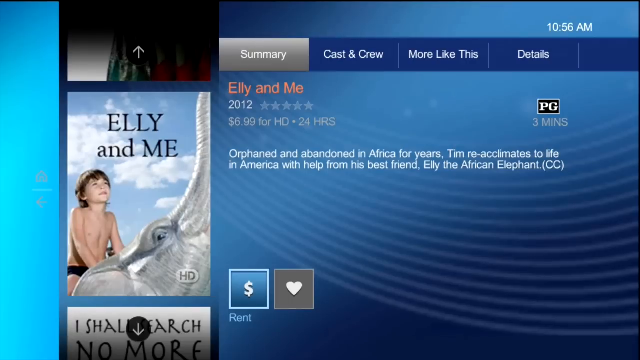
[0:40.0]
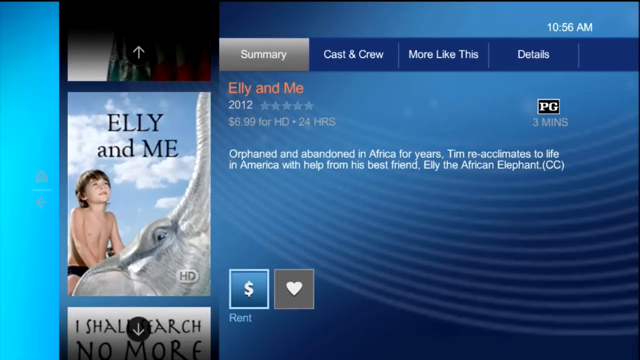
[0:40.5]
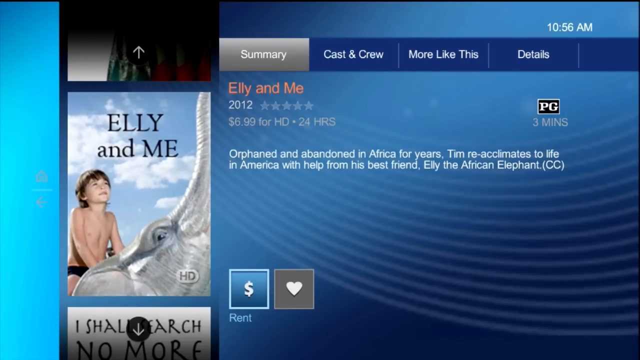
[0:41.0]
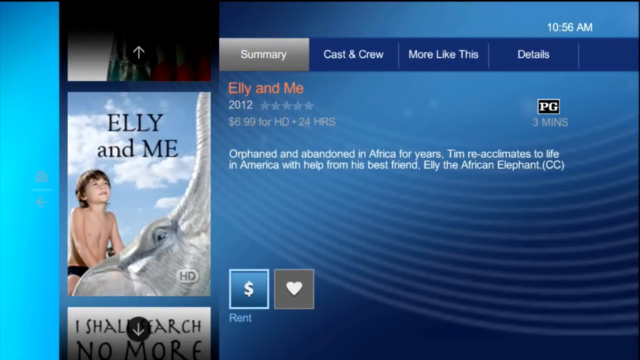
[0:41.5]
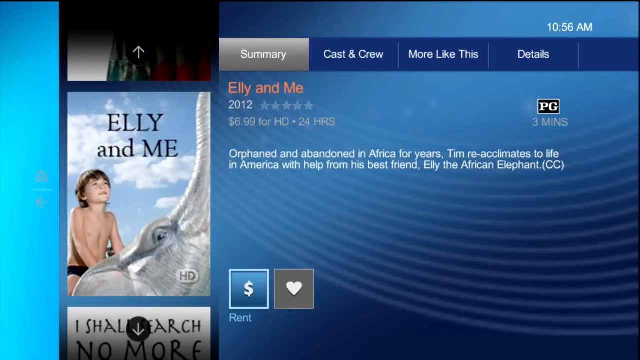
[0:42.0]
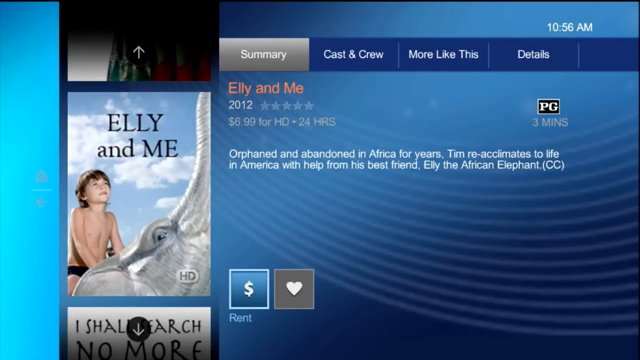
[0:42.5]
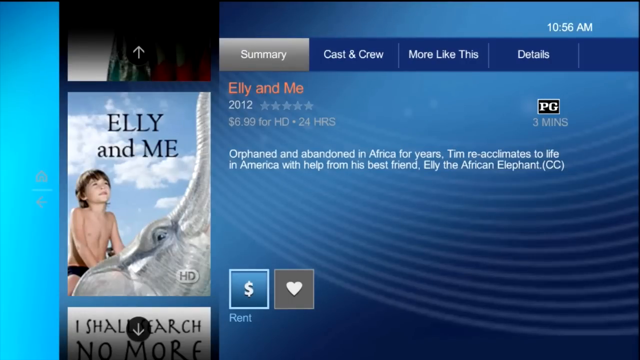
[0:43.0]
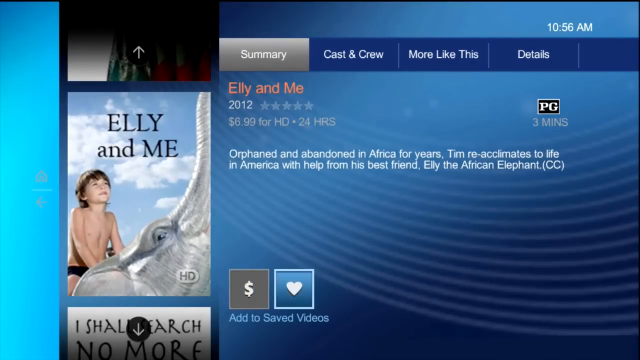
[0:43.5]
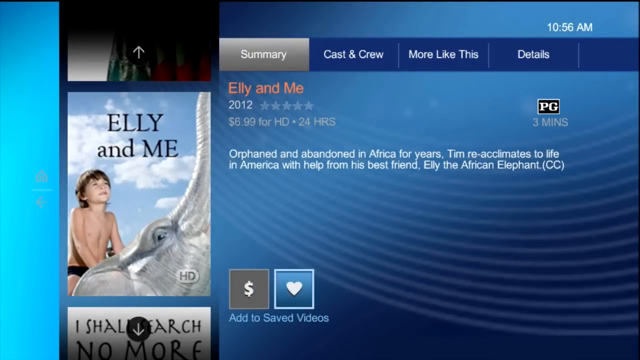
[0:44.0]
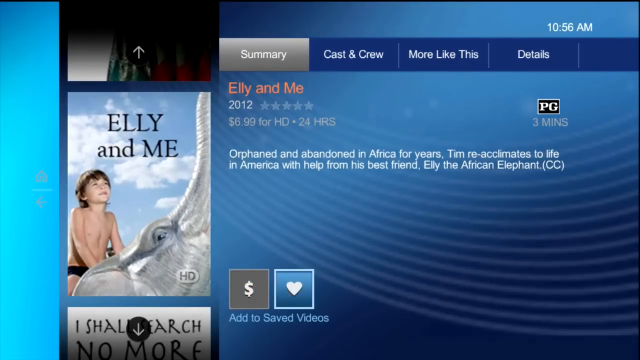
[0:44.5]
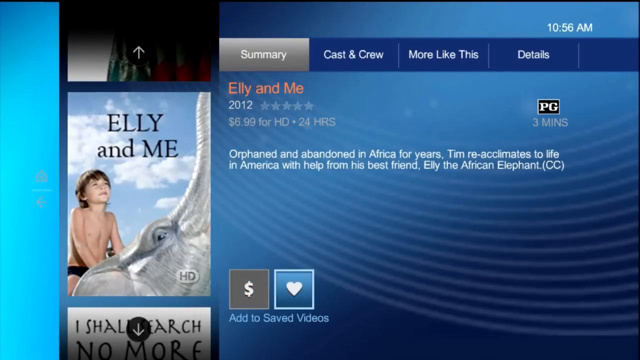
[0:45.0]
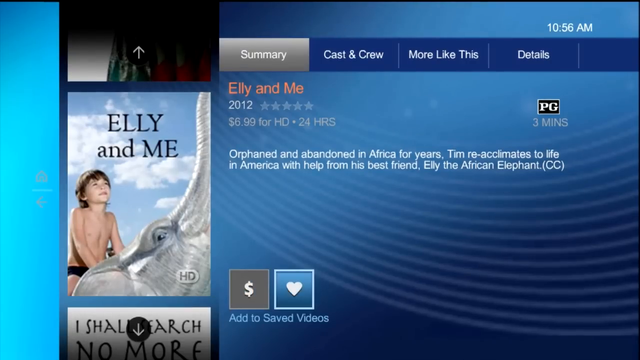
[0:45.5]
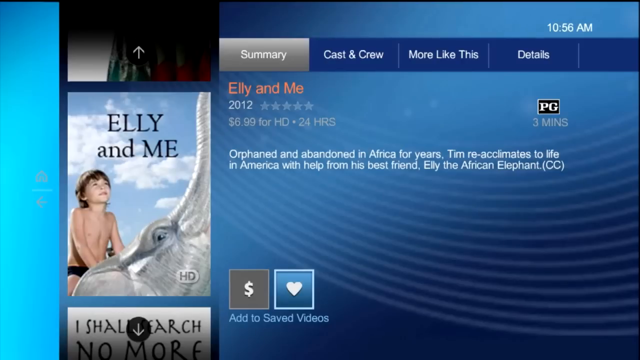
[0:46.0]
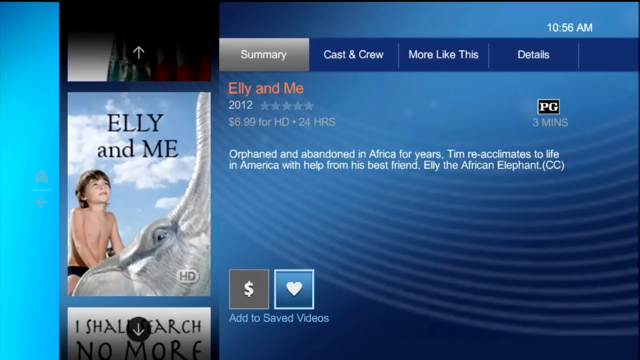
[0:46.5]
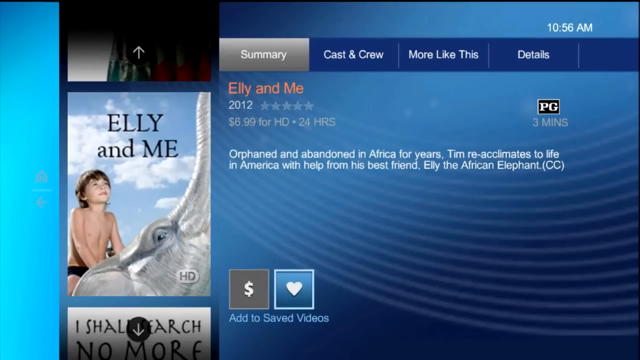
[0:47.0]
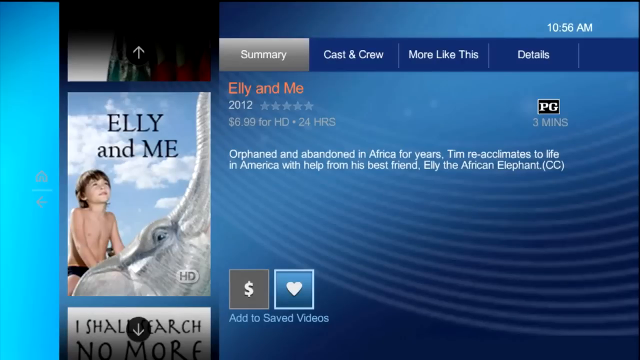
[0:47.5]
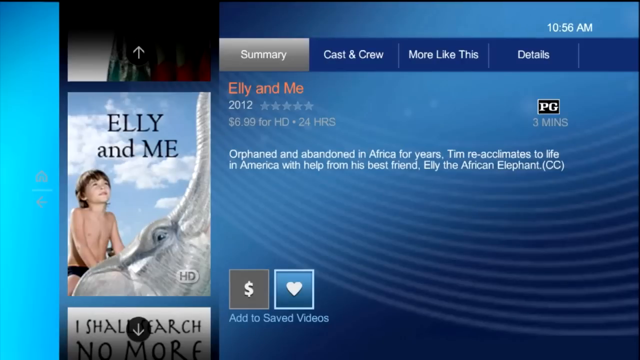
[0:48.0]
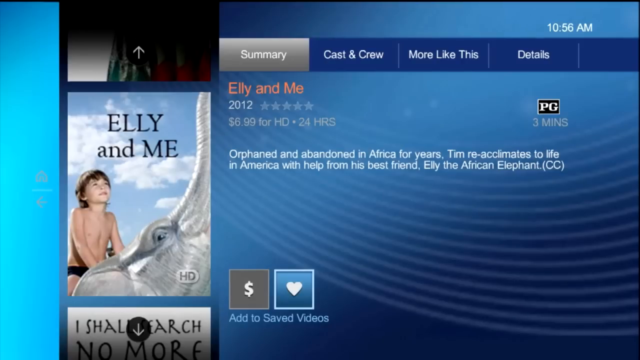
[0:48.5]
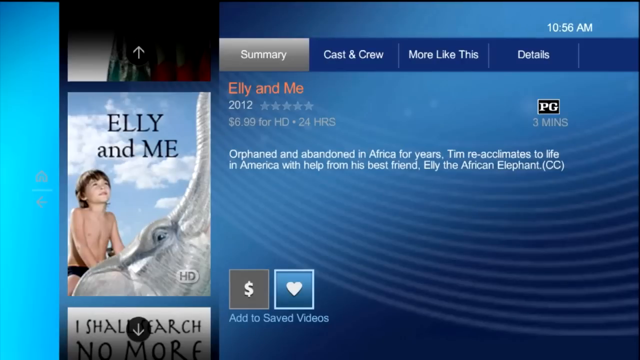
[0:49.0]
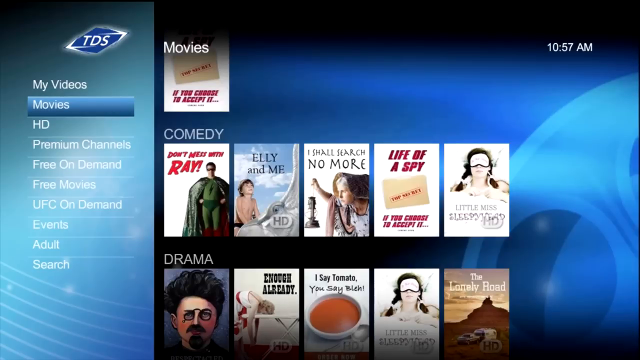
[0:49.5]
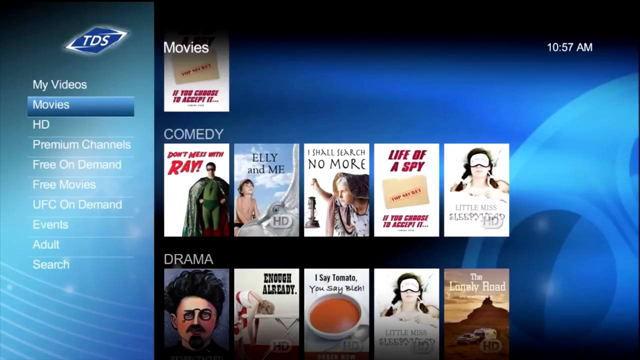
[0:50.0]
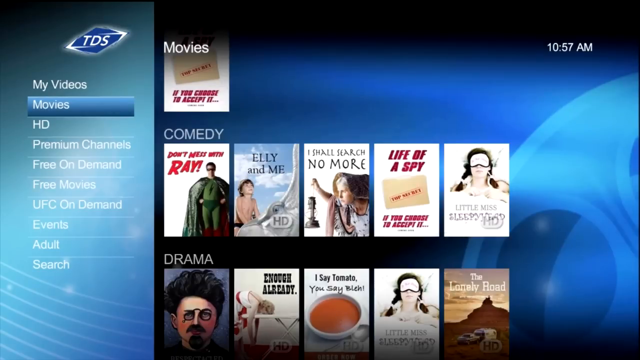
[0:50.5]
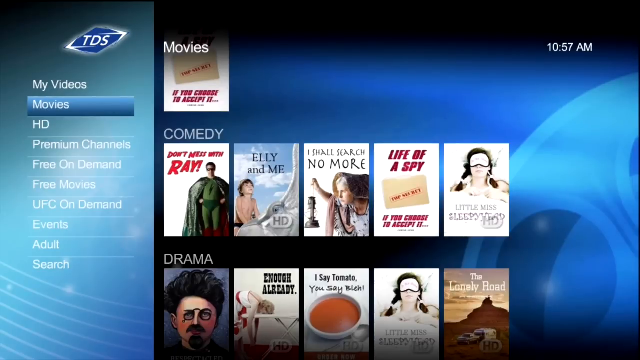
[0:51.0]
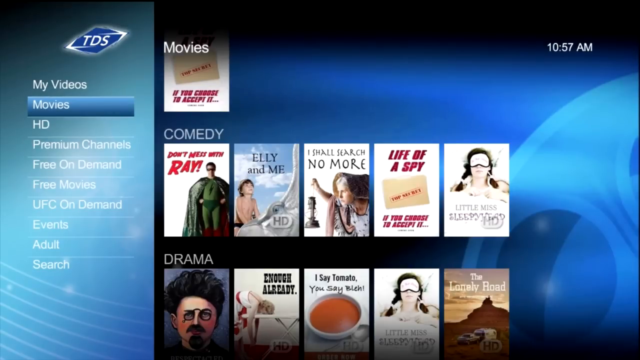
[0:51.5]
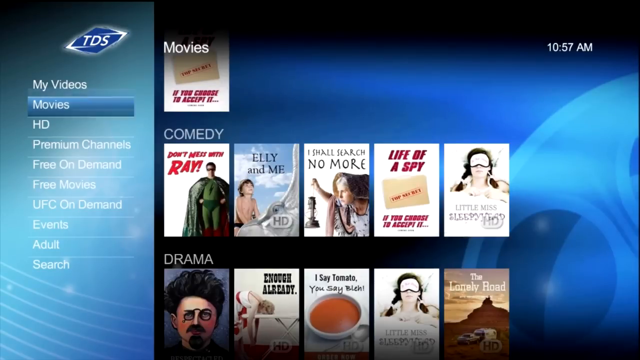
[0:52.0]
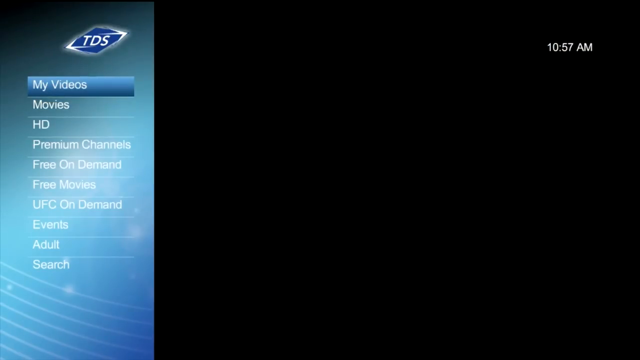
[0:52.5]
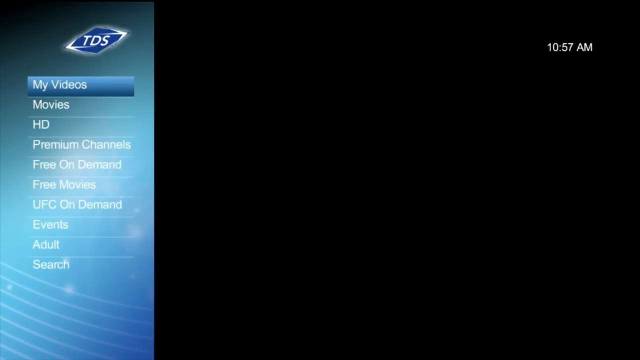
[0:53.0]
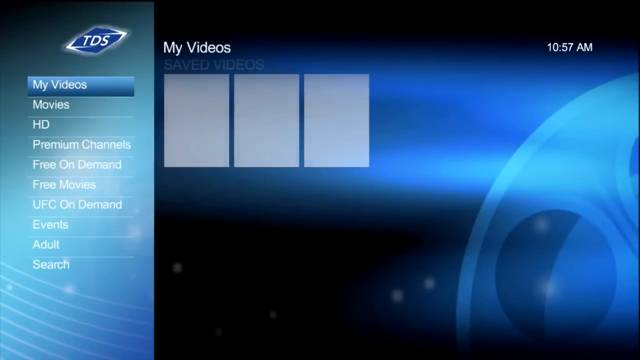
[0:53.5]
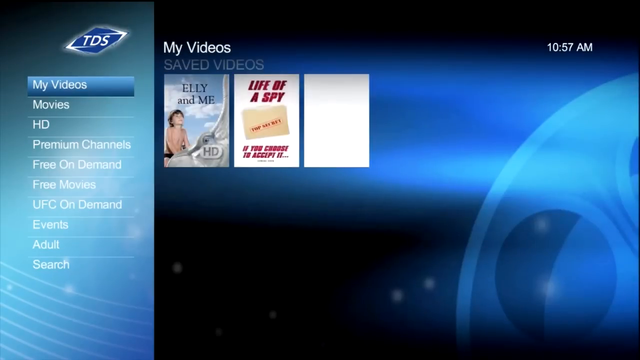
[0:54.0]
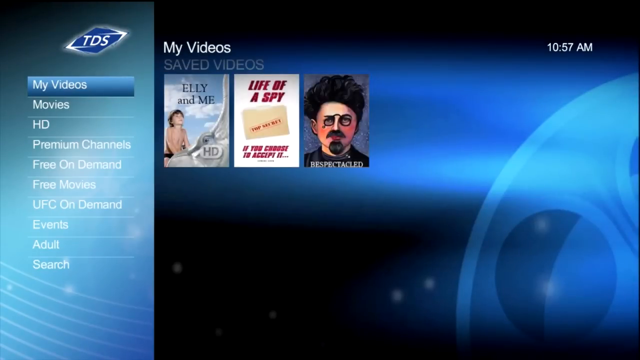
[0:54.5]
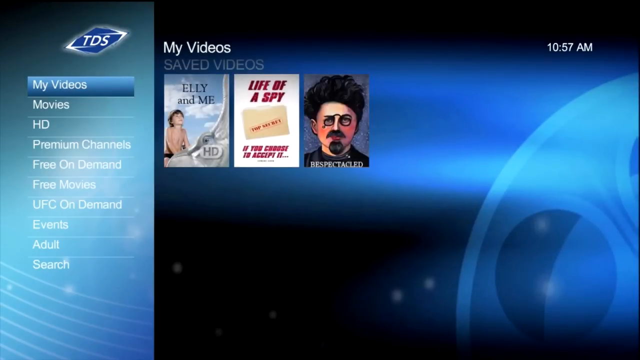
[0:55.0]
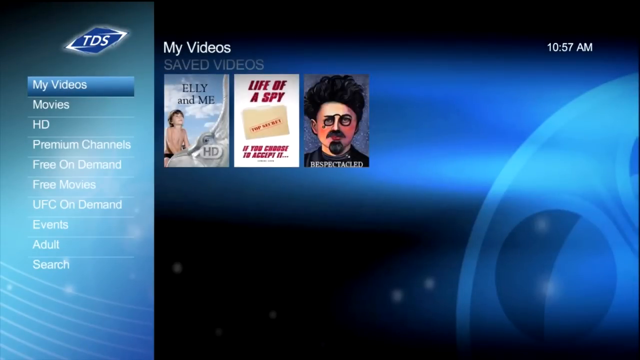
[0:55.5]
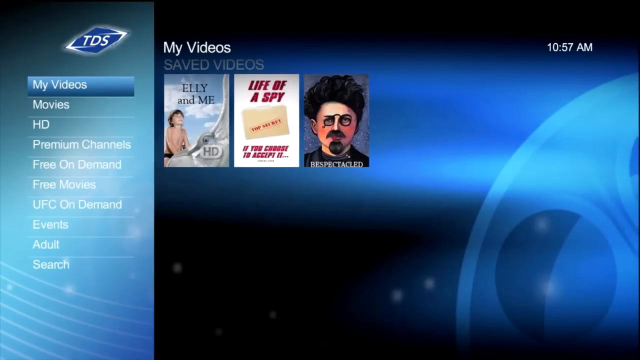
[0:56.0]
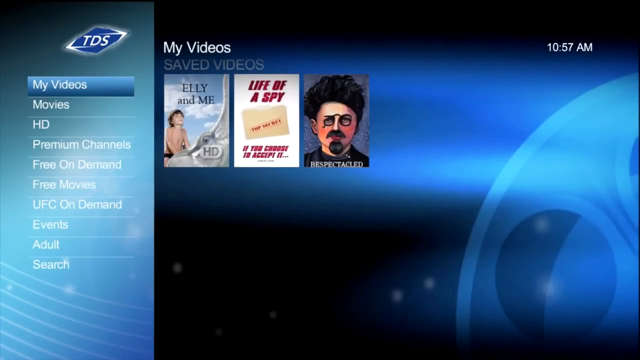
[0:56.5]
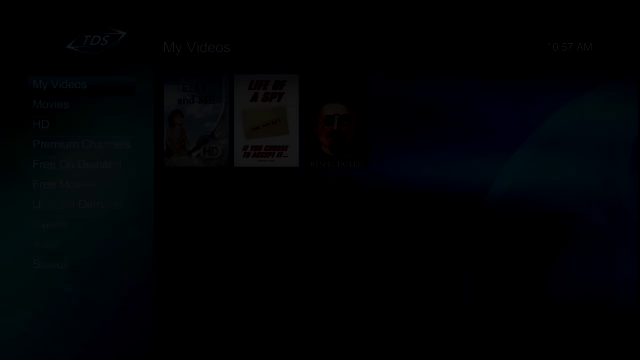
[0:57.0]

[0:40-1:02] The same movie application is shown, with movie covers on the left-hand side. The selected title is ELLY and Me; its image shows the movie's name at the top middle and a young boy who appears to be riding a grayish elephant, with clouds and a blue sky in the background. The user moves the cursor to the right, and the selection in the bottom middle box shifts from the money symbol, for rent, to a heart symbol, for adding to saved videos. They then exit the movie and go up to My Videos in the vertical rectangular box on the left, which lists My Videos, Movies, HD, Premium Channels, Free On Demand, Free Movies, UFC On Demand, Events, Adult and Search. The My Videos selection has three videos listed. The screen then goes black and the video ends.